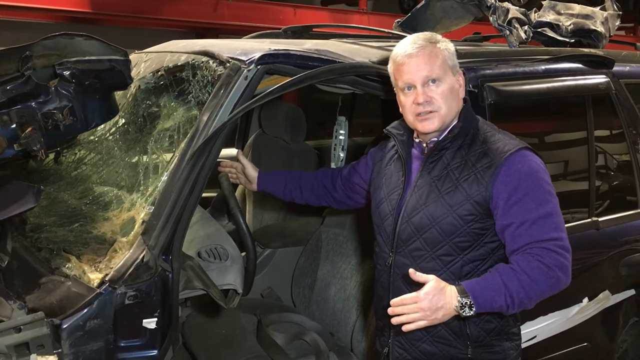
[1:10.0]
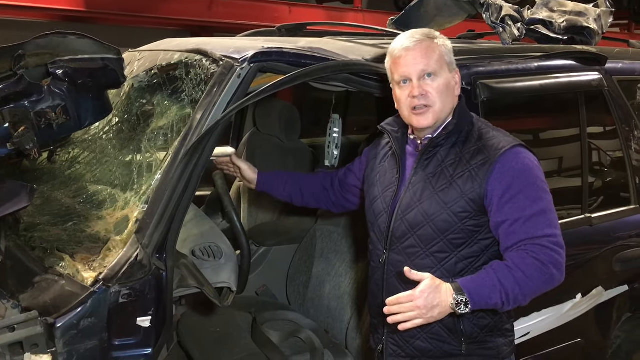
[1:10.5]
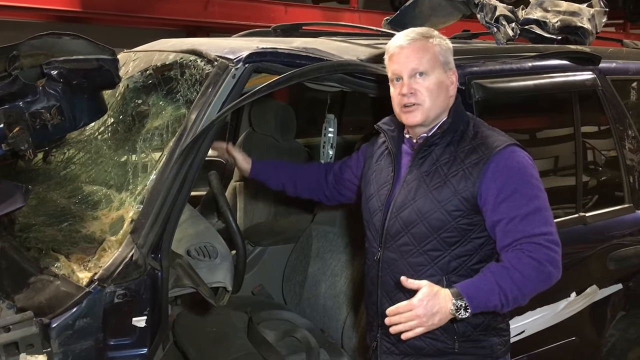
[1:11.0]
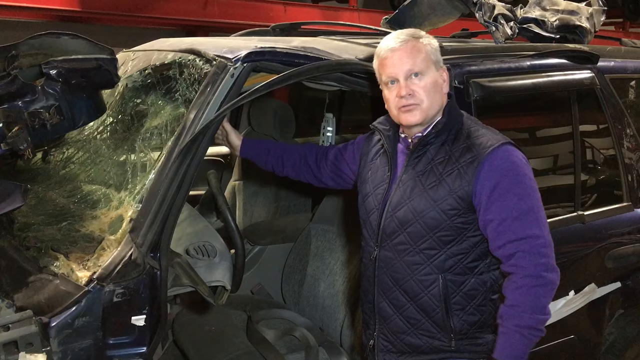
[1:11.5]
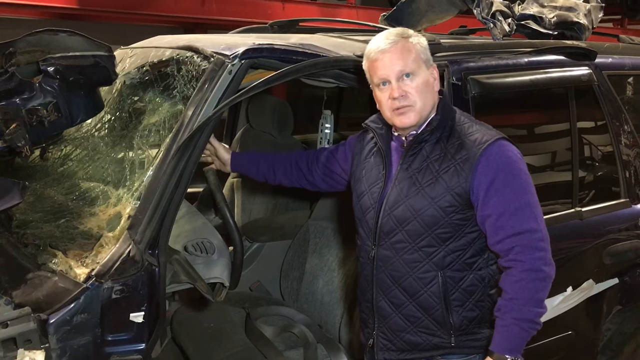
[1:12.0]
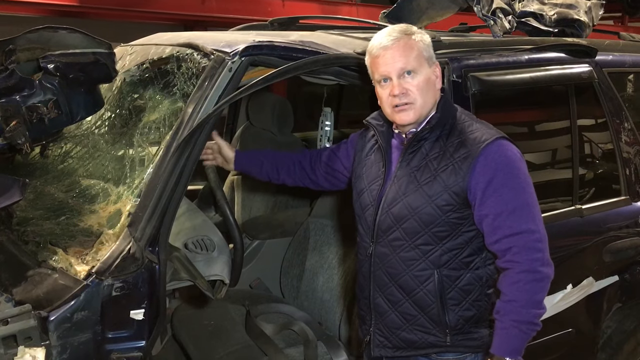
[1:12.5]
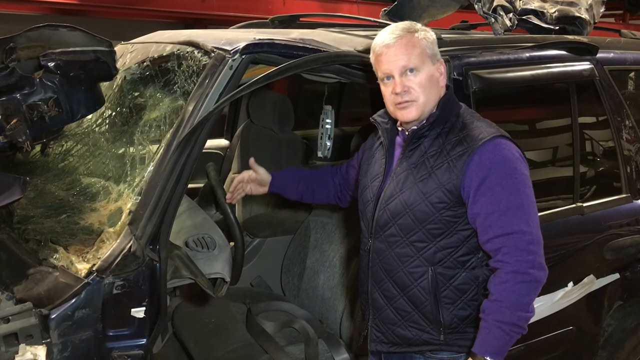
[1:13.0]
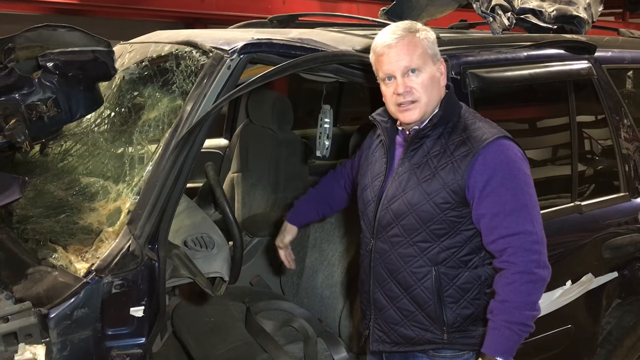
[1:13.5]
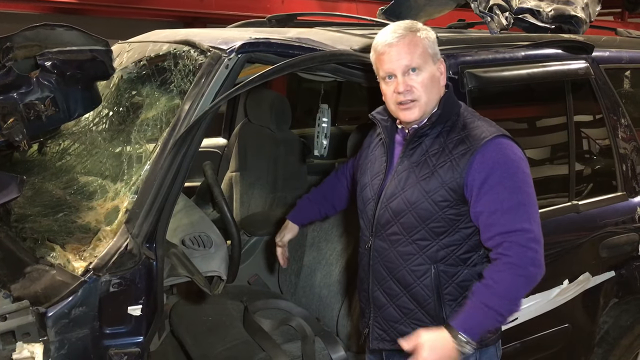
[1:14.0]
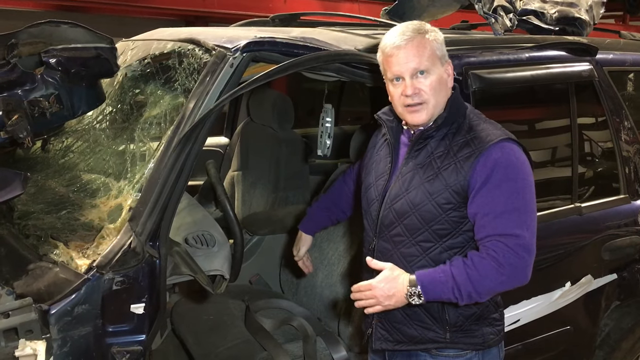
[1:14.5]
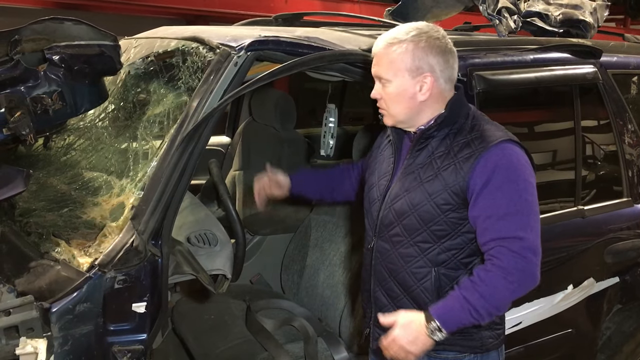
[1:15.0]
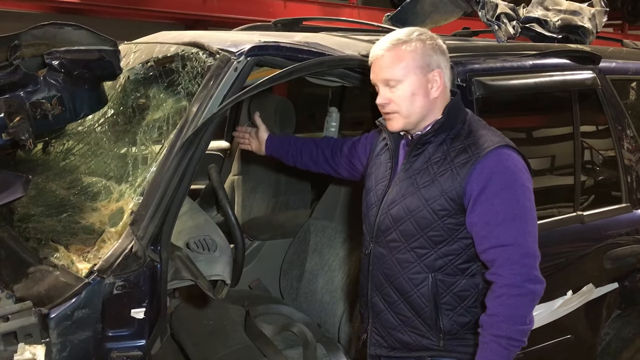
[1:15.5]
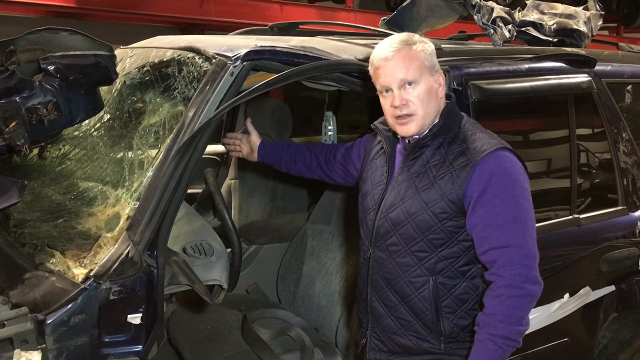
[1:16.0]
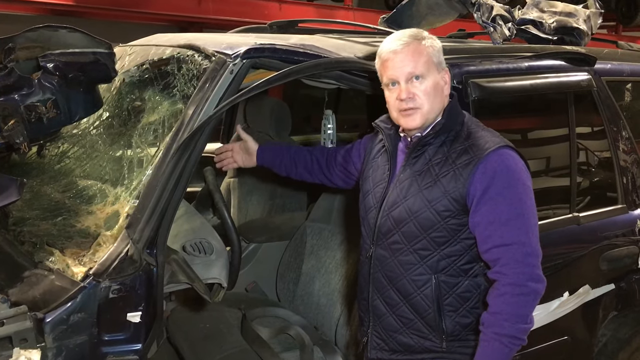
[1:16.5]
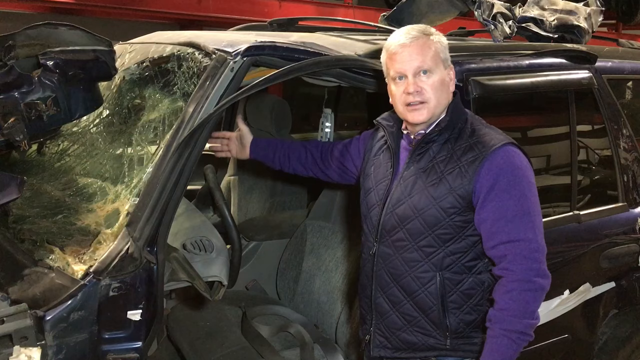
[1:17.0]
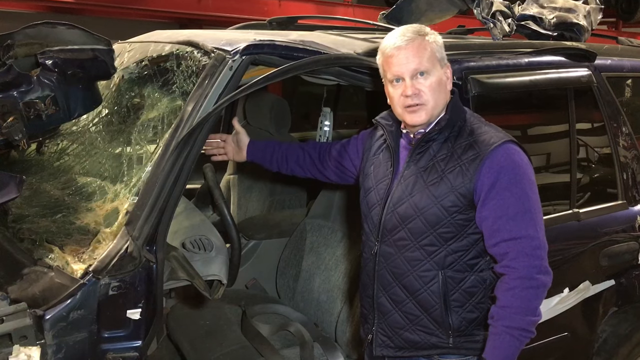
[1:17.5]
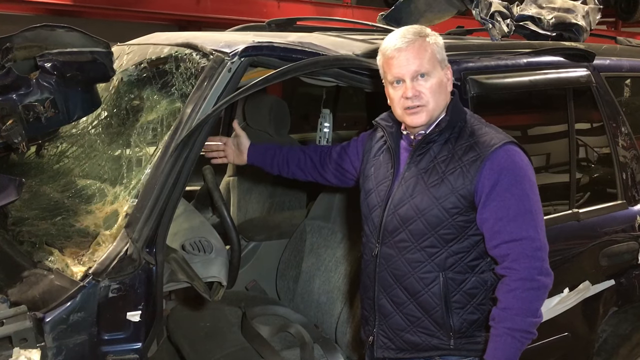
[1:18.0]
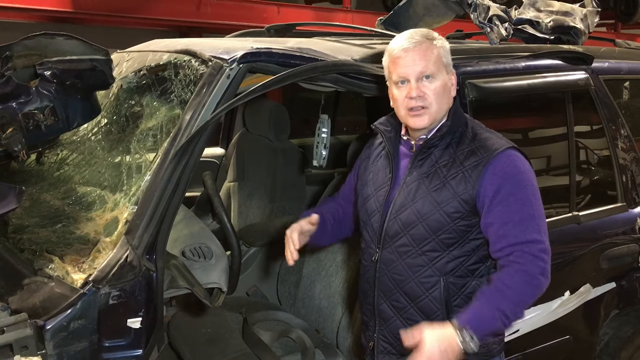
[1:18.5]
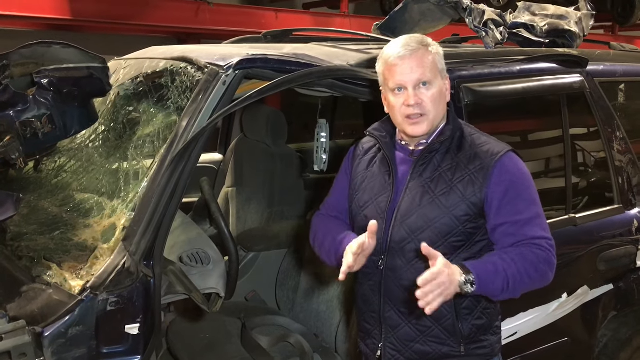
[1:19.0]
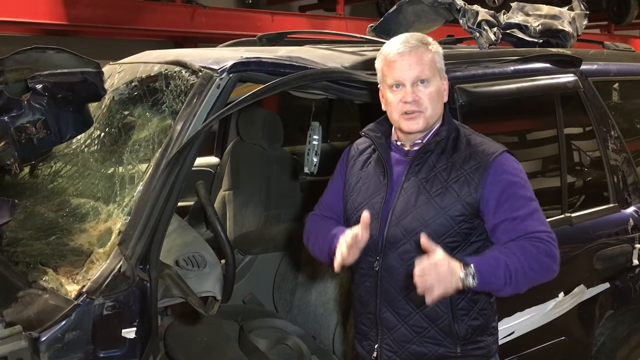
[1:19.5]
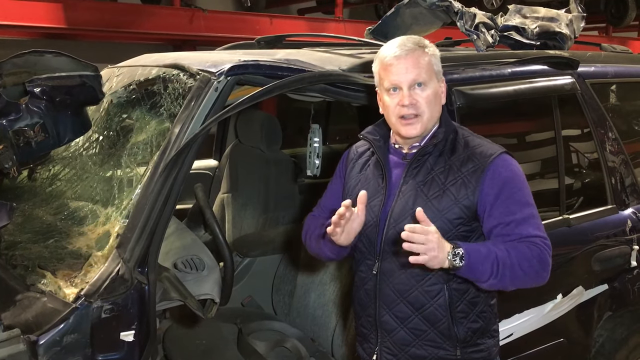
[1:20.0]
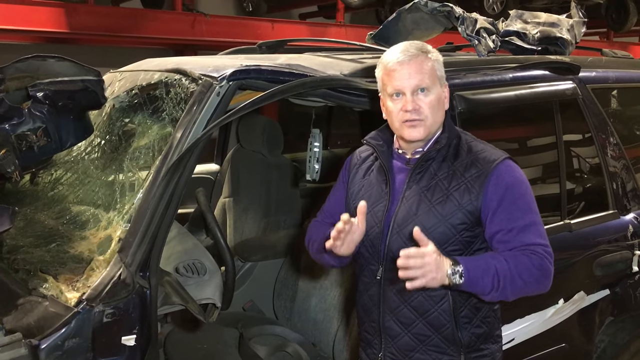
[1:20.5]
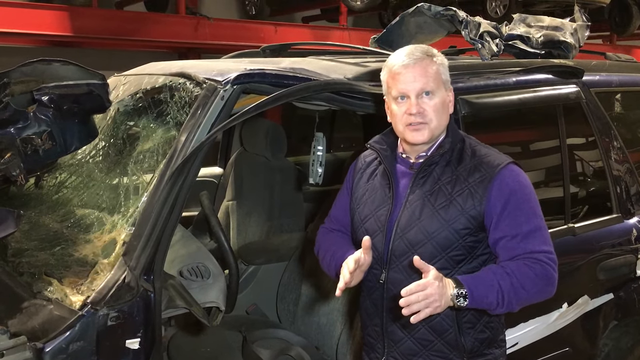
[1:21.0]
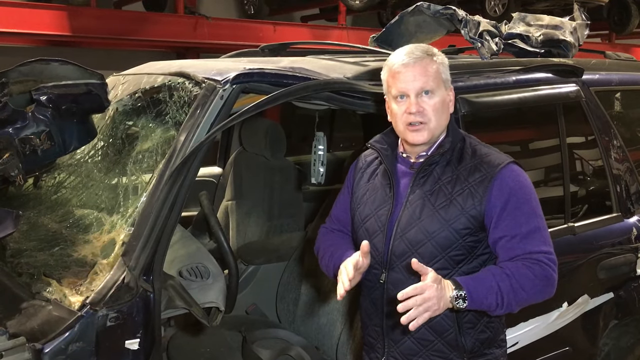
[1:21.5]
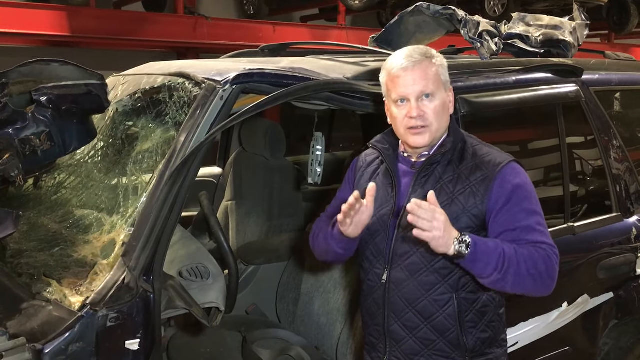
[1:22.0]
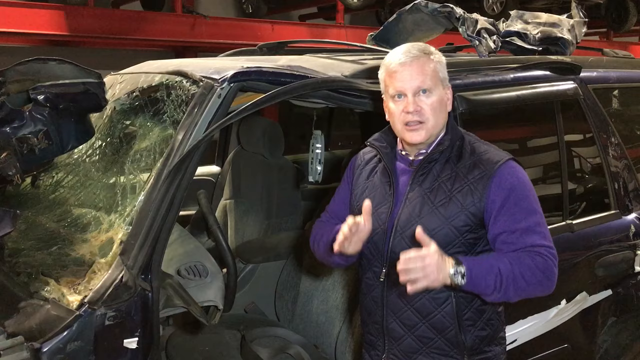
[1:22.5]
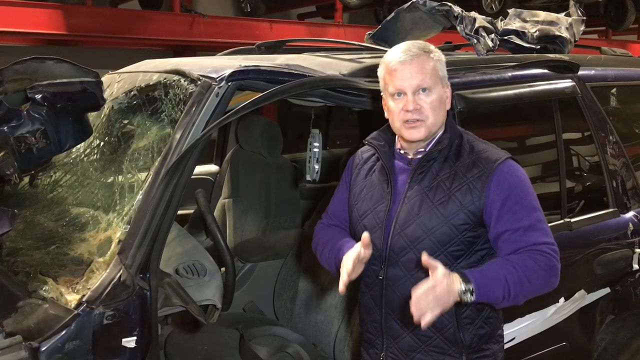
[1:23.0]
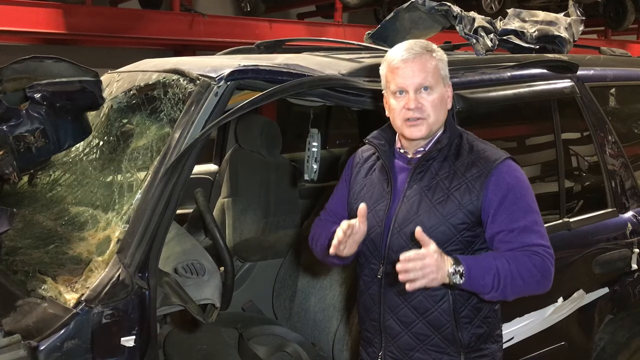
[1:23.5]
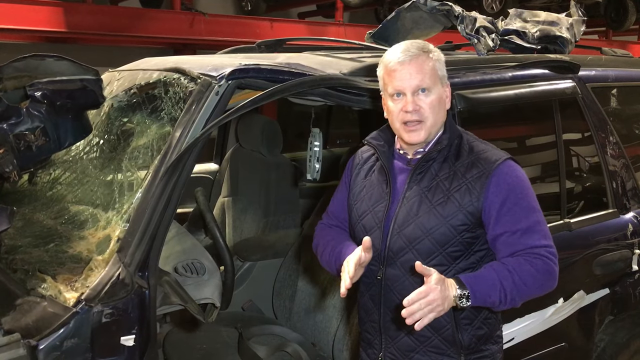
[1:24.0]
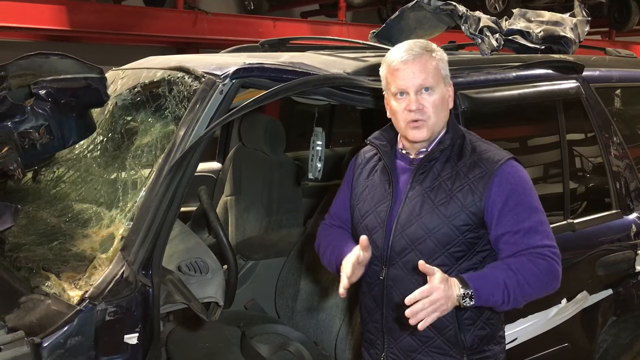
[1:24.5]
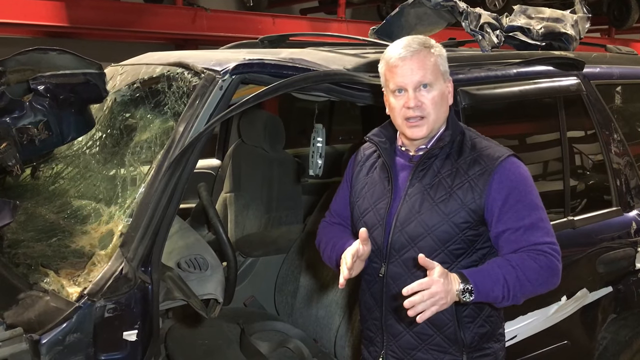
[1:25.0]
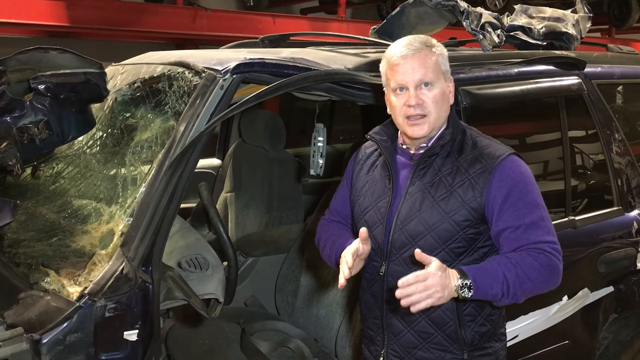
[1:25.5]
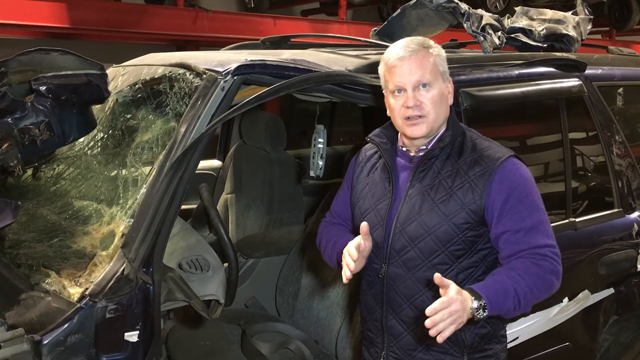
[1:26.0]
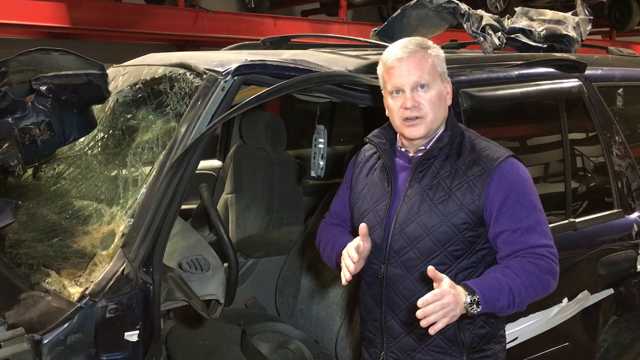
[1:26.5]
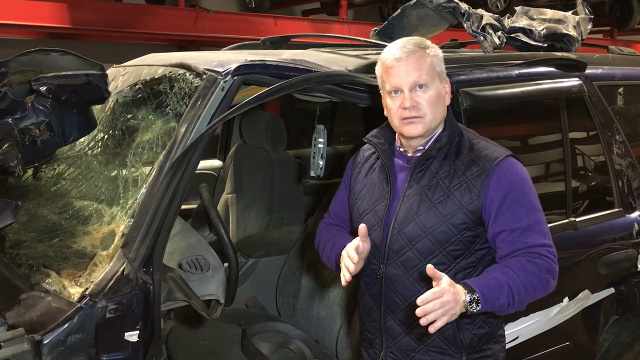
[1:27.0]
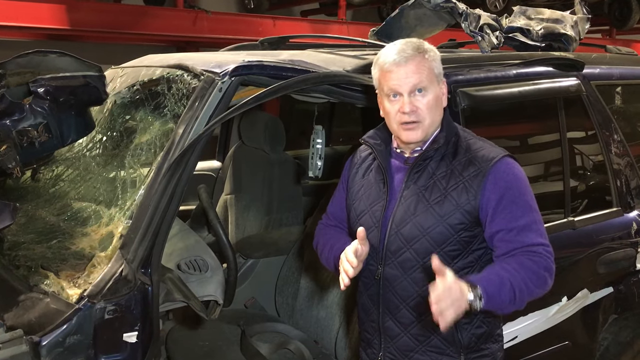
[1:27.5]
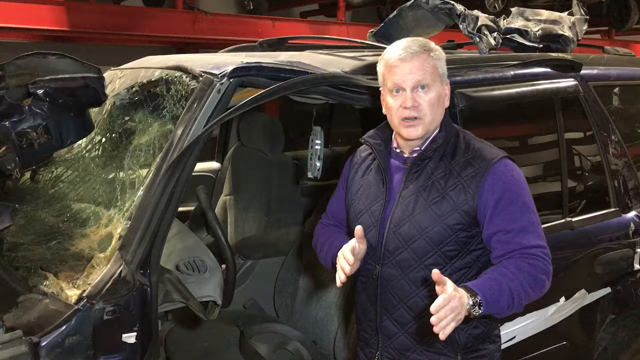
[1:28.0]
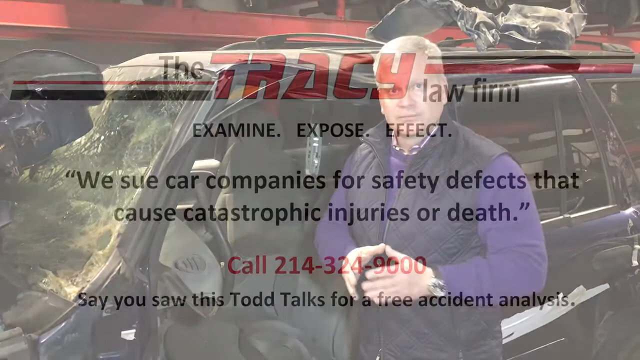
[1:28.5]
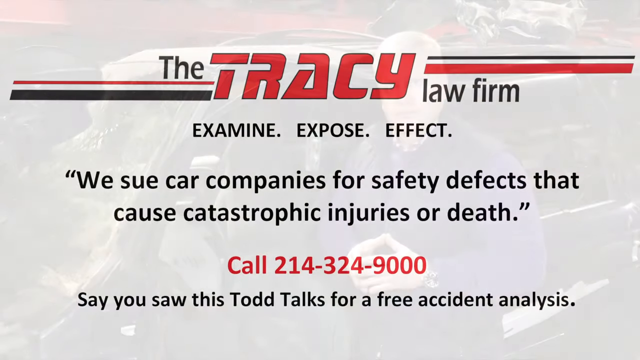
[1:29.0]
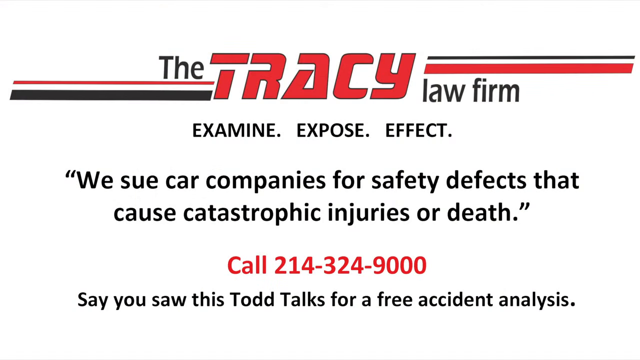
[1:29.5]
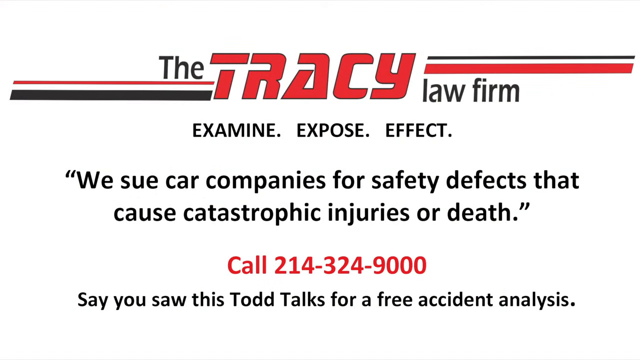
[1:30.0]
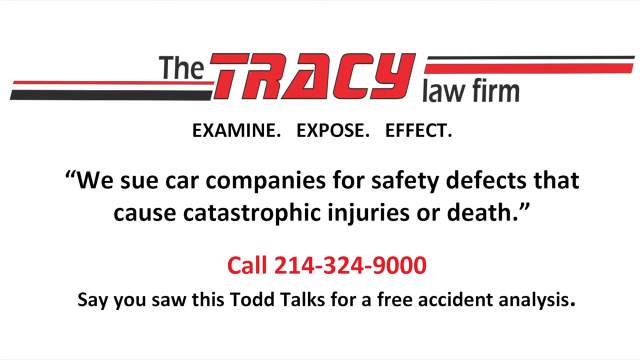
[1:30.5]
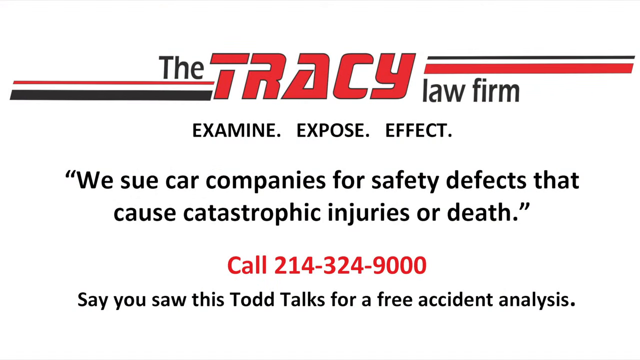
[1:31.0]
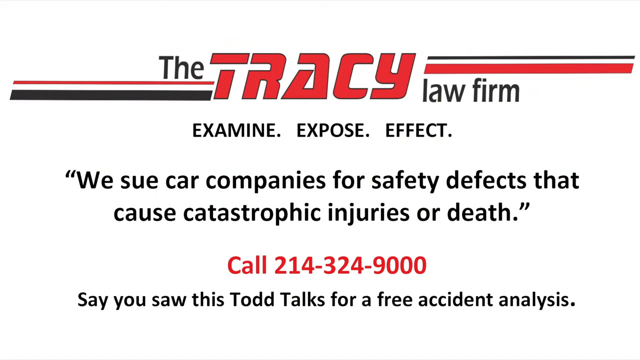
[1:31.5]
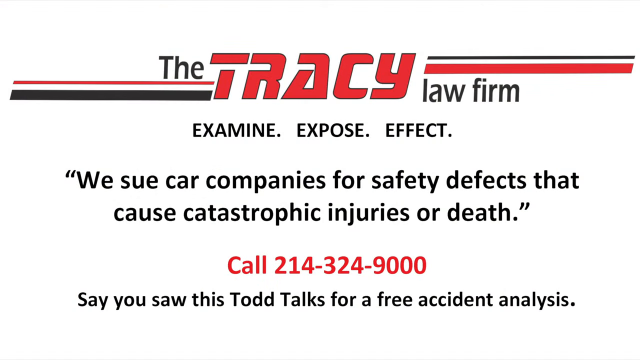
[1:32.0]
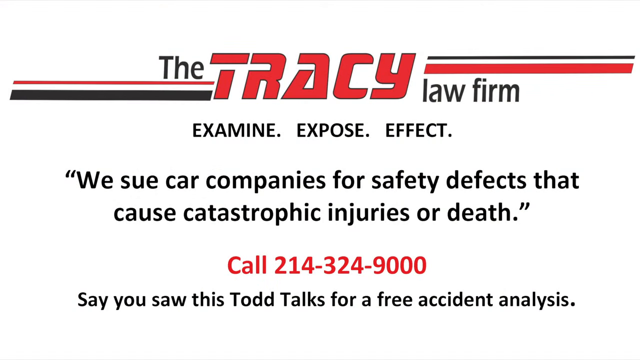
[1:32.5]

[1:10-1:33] The man stands just outside the driver's side of the vehicle, which has no driver's side door, giving a clear view inside. He talks directly to the camera and shows the passenger compartment, pointing inside with his open right hand and then sweeping his right arm and hand back toward the bottom of the seated area. He finishes talking to the camera with both hands extended, palms facing each other, swinging his arms together in a sort of adamant gesture, as if lecturing about something serious. At the end, the video turns out to be an ad for a law firm, apparently soliciting people who may have been victims of accidents they feel could be due to safety defects. It names the Tracy law firm, gives its contact information and credentials, and urges people to contact the firm. It is called a Todd talk, so the man is presumably named Todd and represents the Tracy law firm.